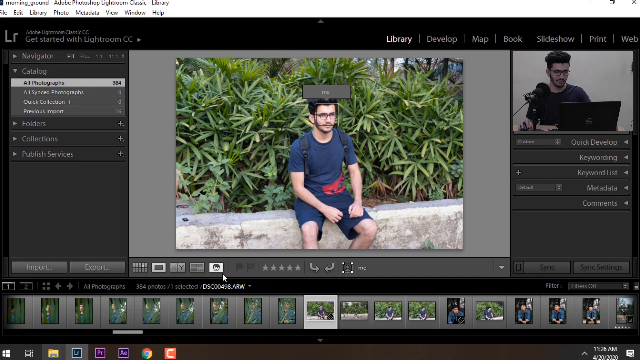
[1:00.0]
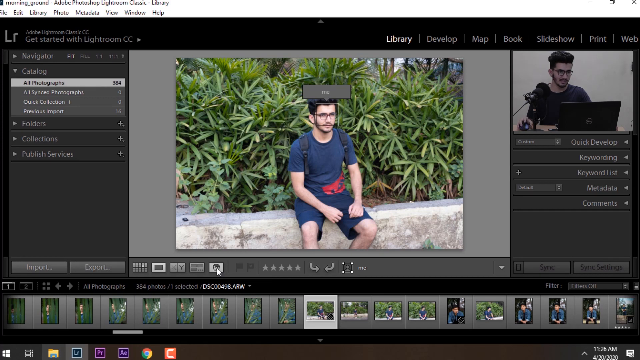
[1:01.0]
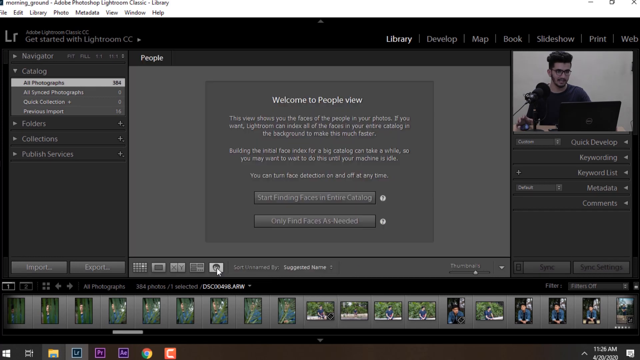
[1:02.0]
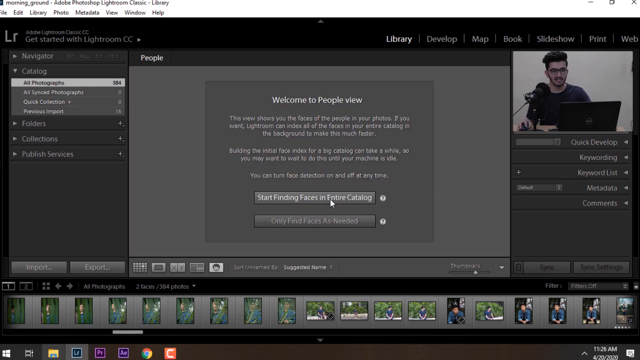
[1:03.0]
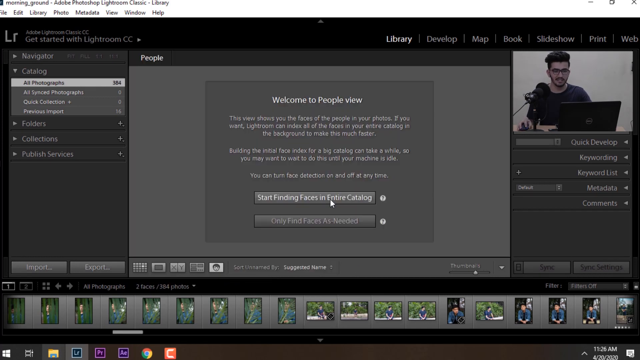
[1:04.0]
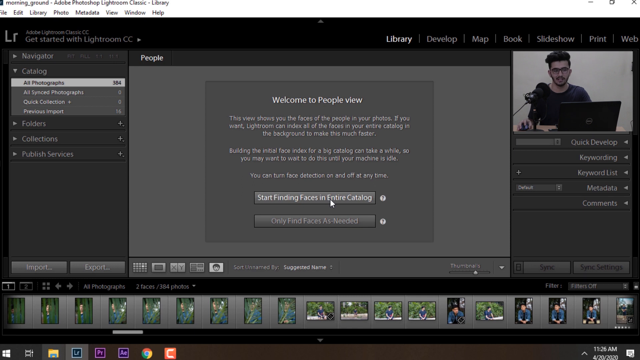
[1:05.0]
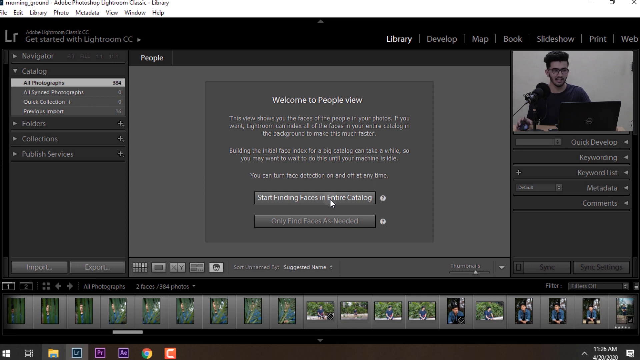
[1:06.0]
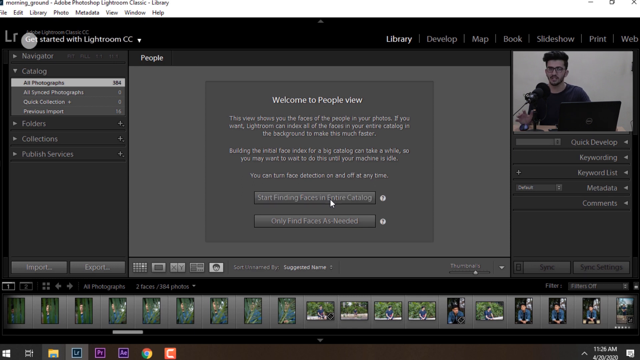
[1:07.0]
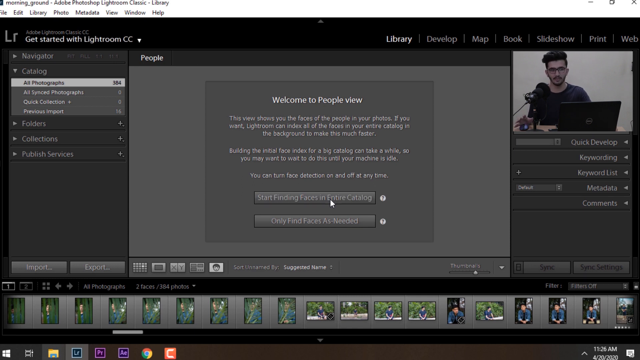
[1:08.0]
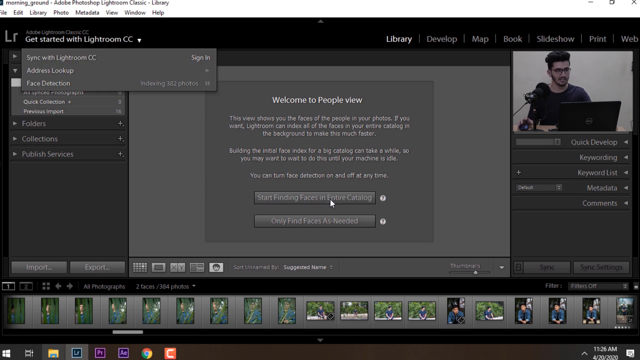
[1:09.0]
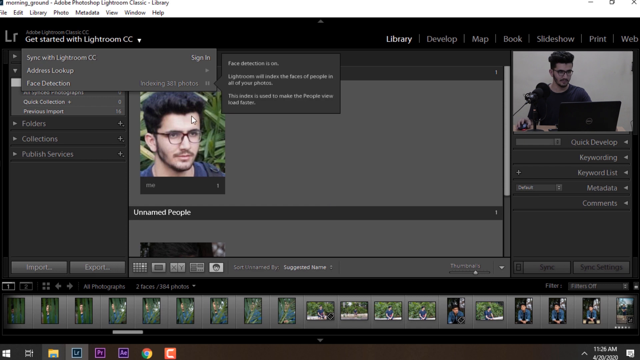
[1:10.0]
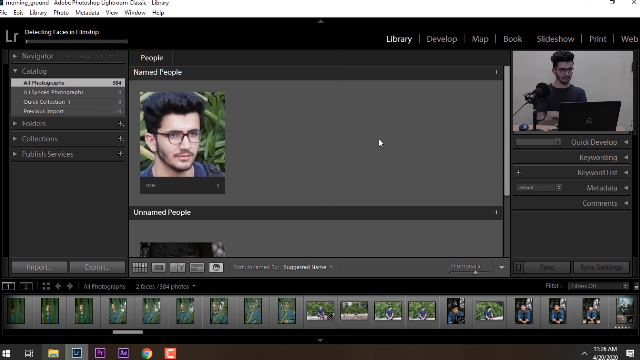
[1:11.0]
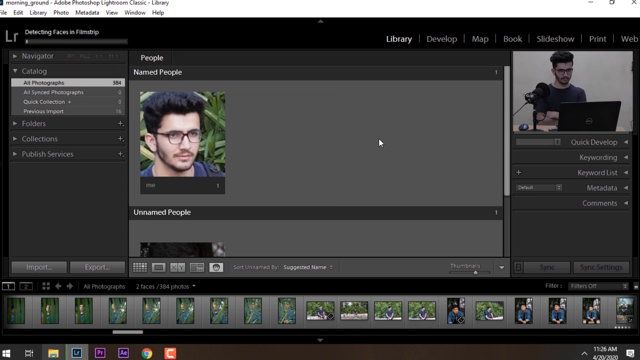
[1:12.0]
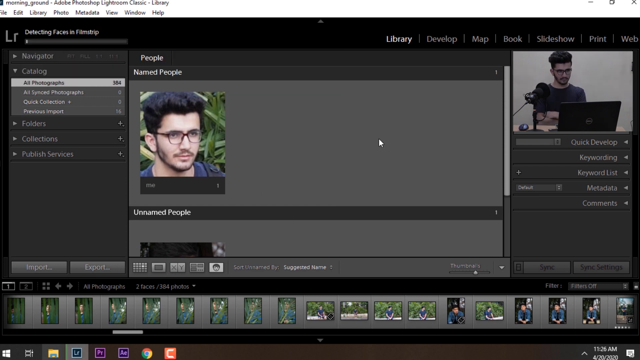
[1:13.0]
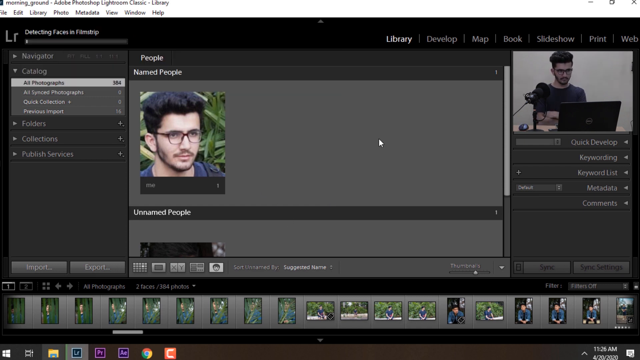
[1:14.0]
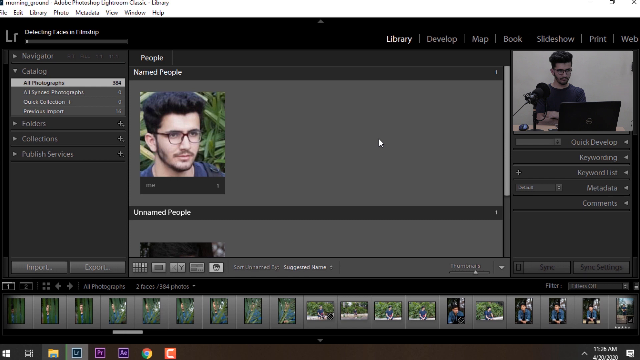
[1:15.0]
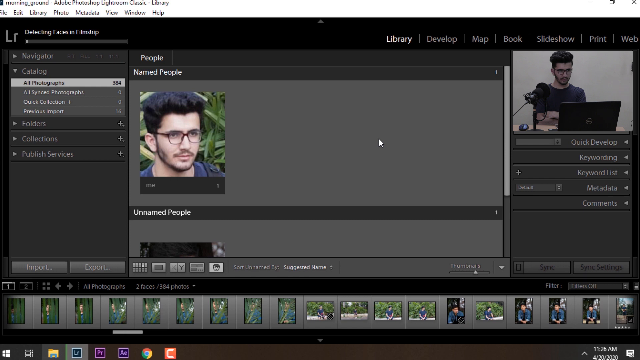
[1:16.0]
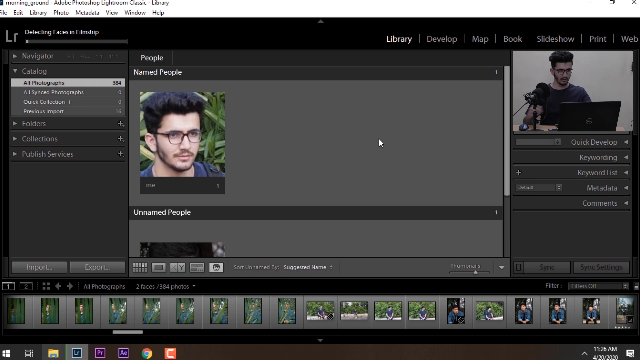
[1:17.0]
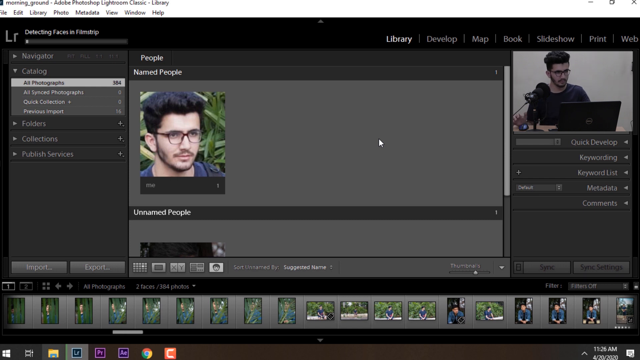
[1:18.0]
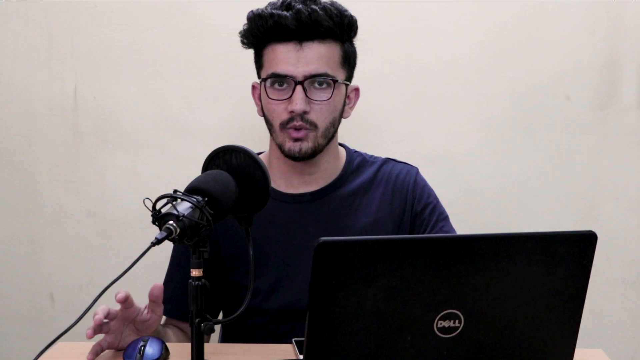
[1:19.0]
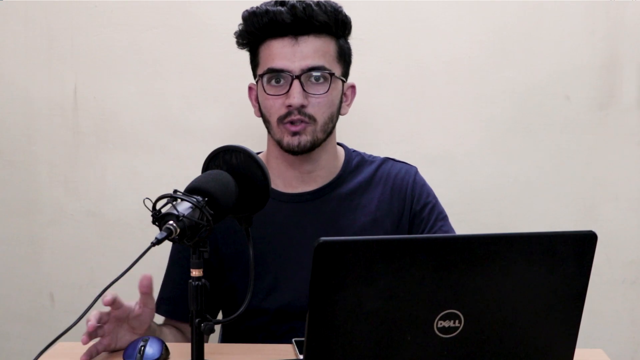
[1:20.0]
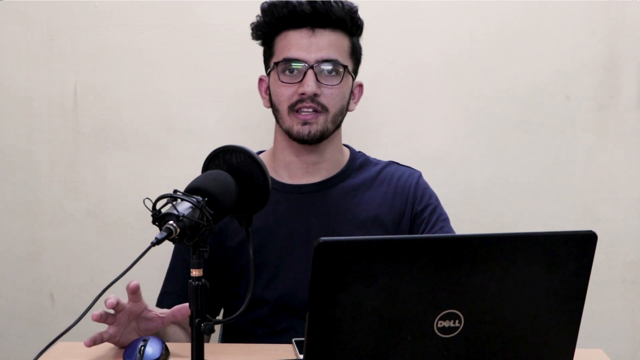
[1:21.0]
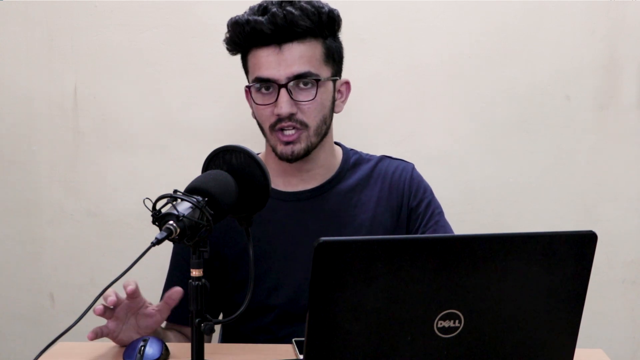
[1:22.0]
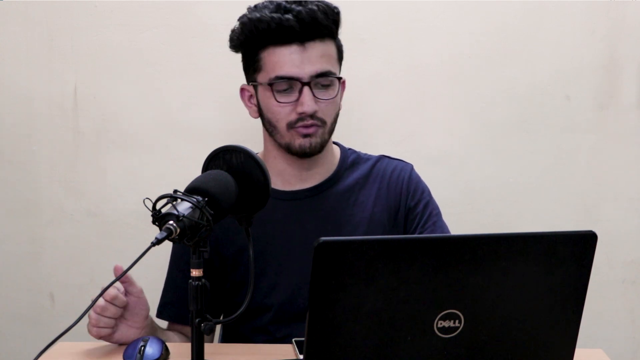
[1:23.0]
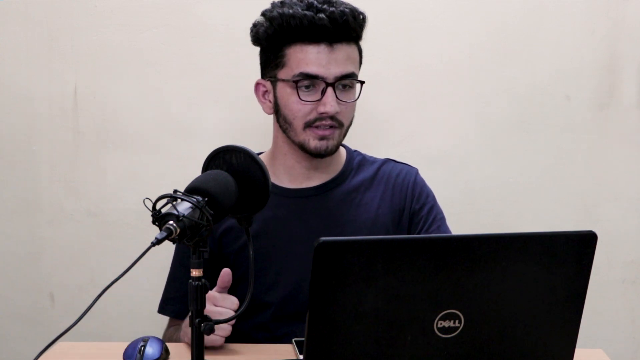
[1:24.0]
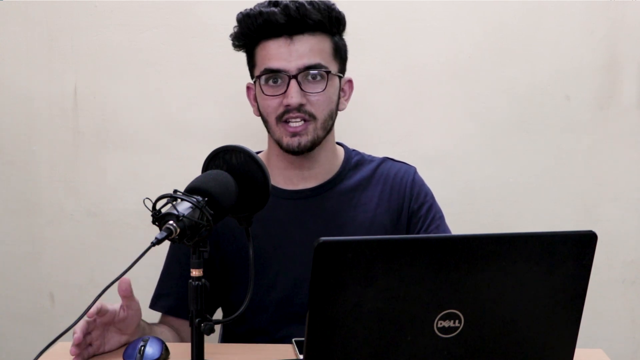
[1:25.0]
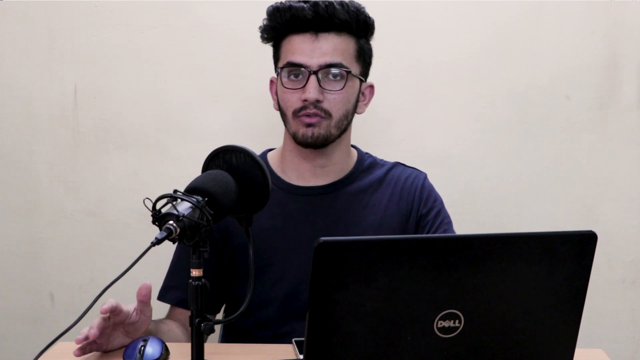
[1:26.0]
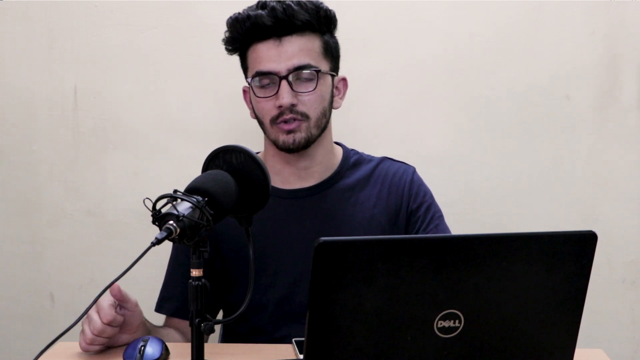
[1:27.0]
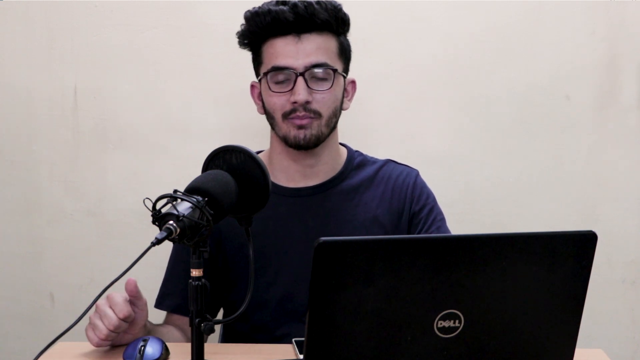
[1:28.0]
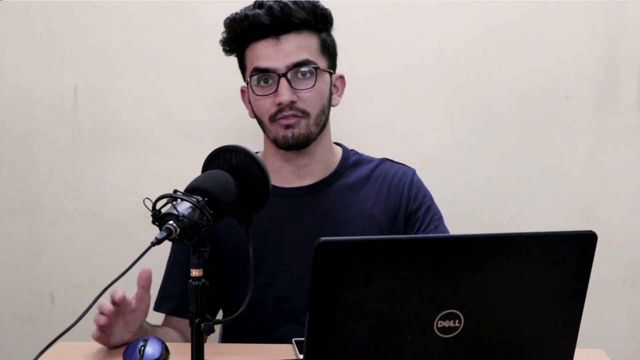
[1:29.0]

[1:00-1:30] The desktop view shows Adobe Lightroom CC with the photo of the man in the middle. The mouse arrow moves down to the options underneath the photo, where what looks like a circle, possibly a face button, is selected, and the screen reads "Welcome to people view. This view shows you the faces of the people in your photos. If you want, Lightroom can index all of the faces in your entire catalog in the background to make this much faster. Building this initial face index for a big catalog can take a while" and "You can turn face detection on and off at any time". There are two clickable buttons: one says "start finding faces in entire catalog" and the other says "only find faces as needed". The user hovers over the "start finding faces in entire catalog" button and clicks it, and the cursor goes up to the menu in the upper right corner. A catalog of faces appears in the center of the screen. The video then cuts back to the creator behind the computer and microphone, speaking to the camera.